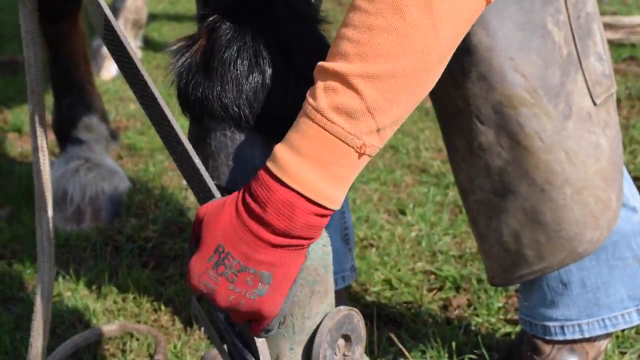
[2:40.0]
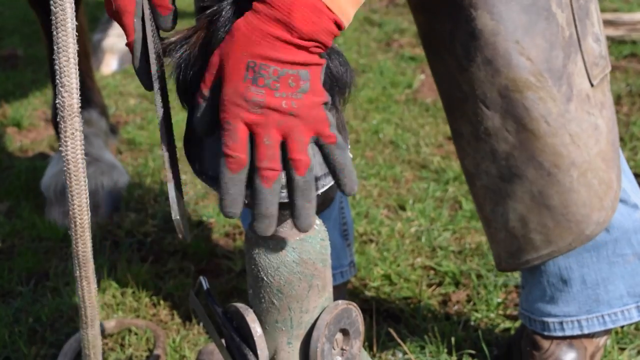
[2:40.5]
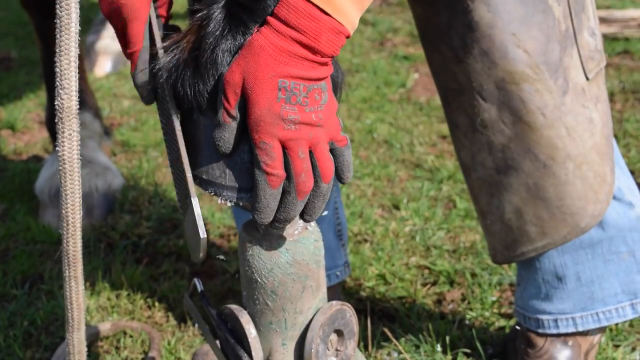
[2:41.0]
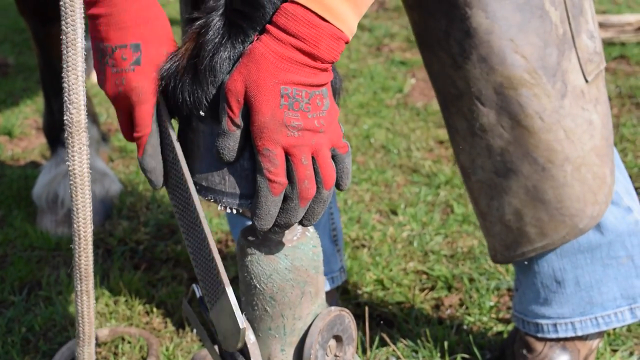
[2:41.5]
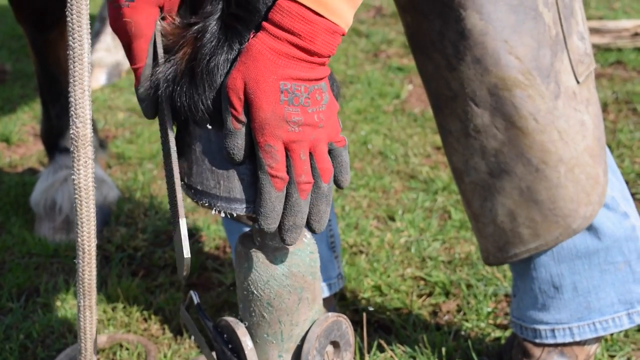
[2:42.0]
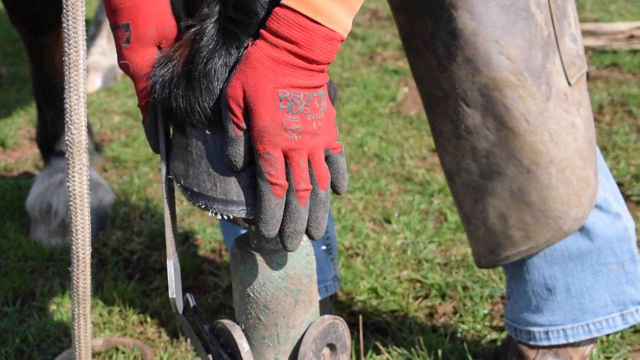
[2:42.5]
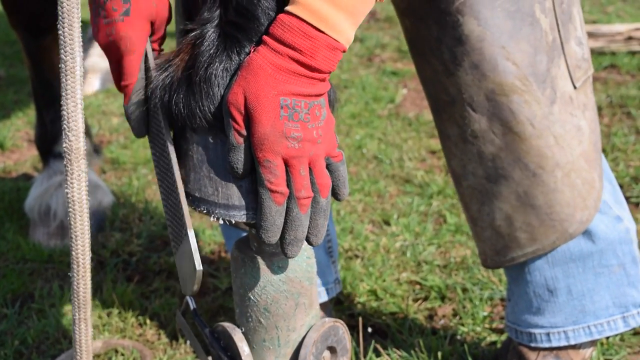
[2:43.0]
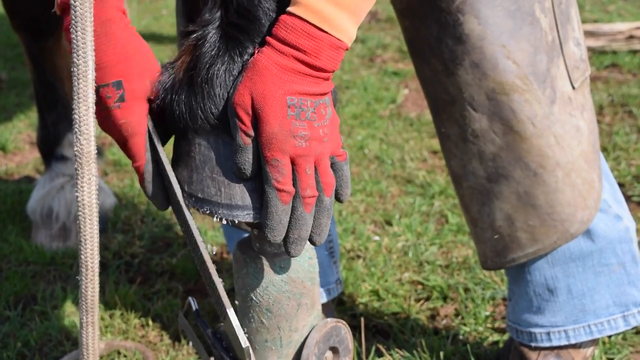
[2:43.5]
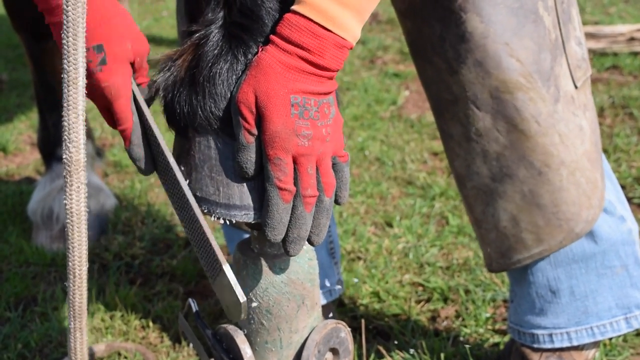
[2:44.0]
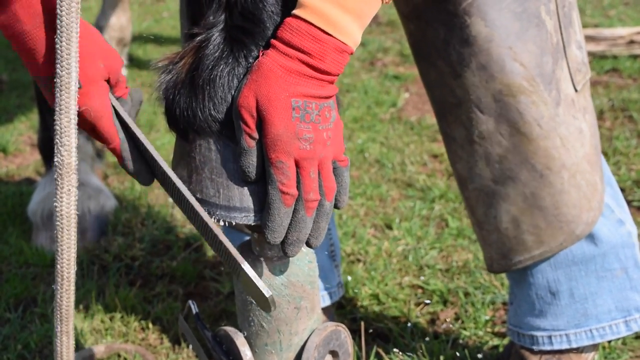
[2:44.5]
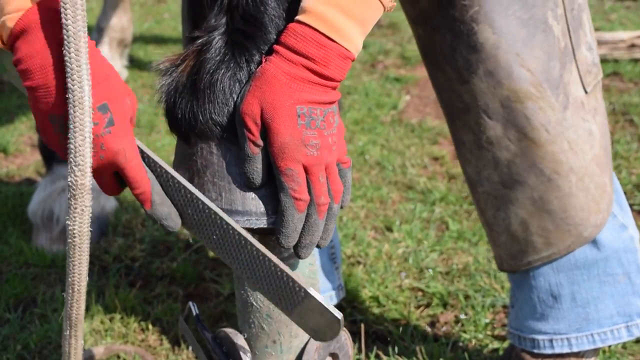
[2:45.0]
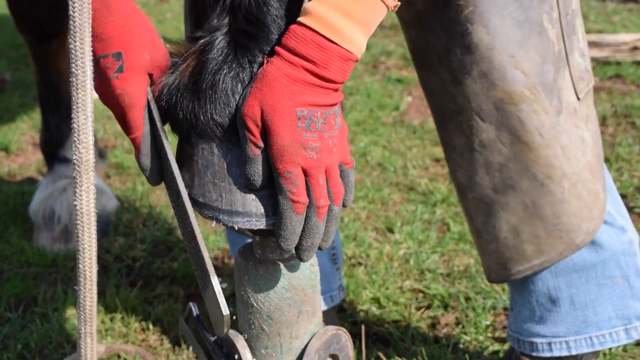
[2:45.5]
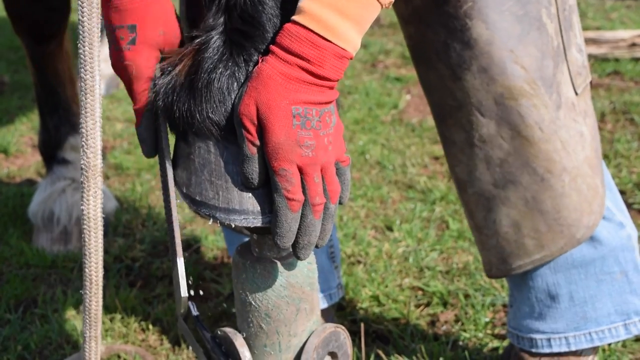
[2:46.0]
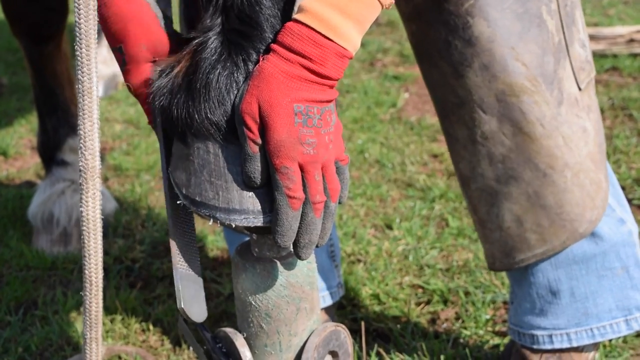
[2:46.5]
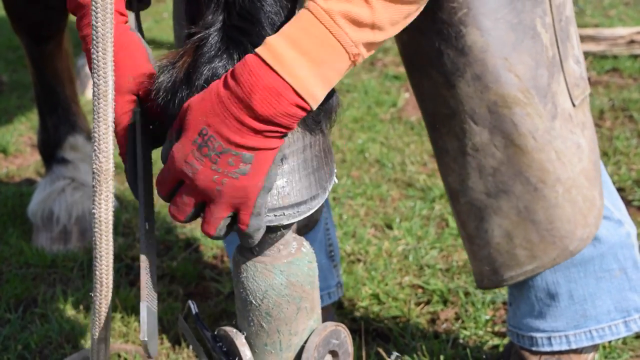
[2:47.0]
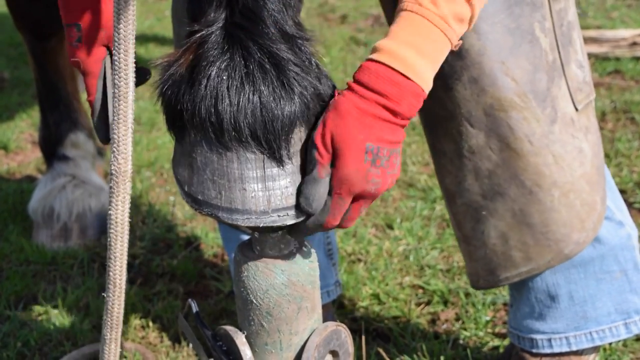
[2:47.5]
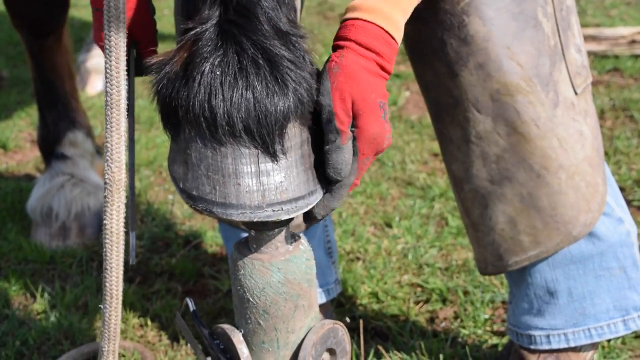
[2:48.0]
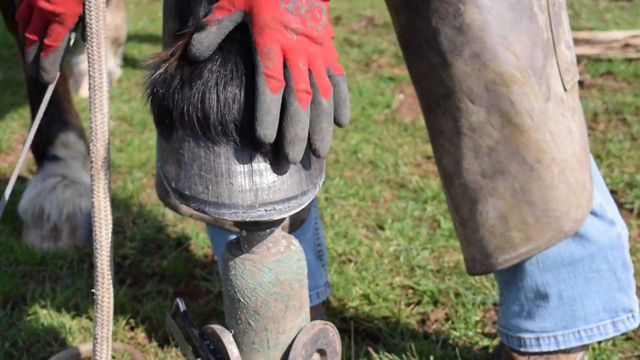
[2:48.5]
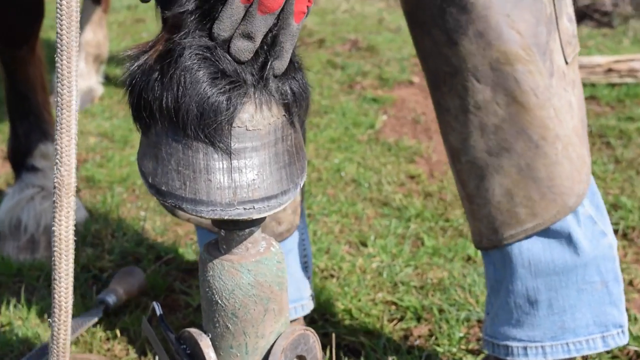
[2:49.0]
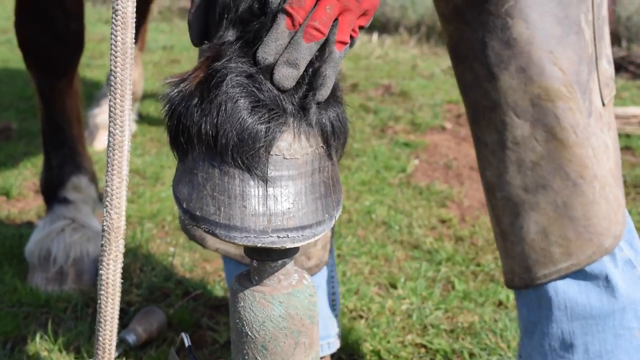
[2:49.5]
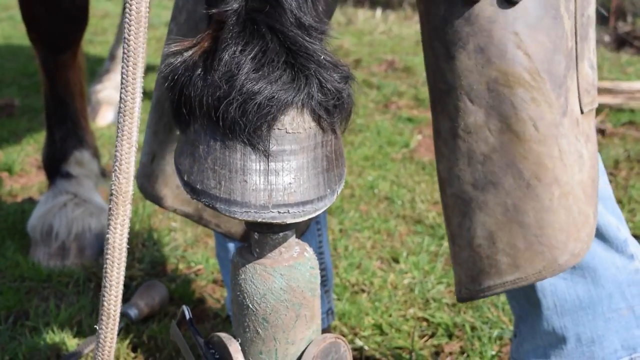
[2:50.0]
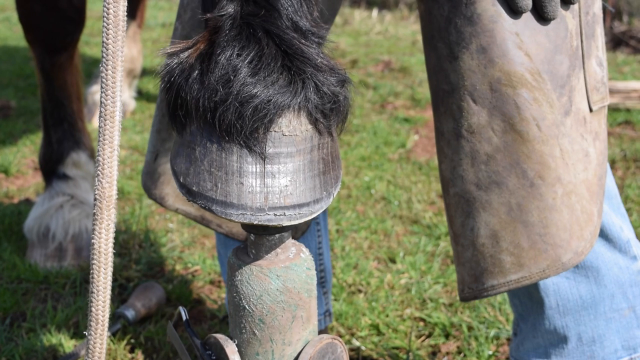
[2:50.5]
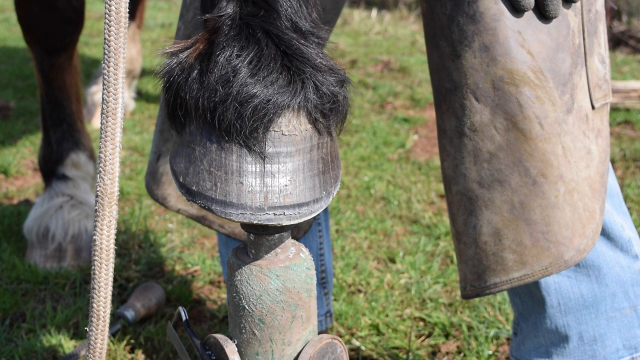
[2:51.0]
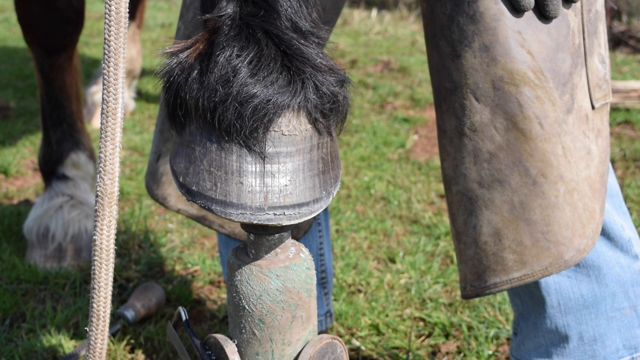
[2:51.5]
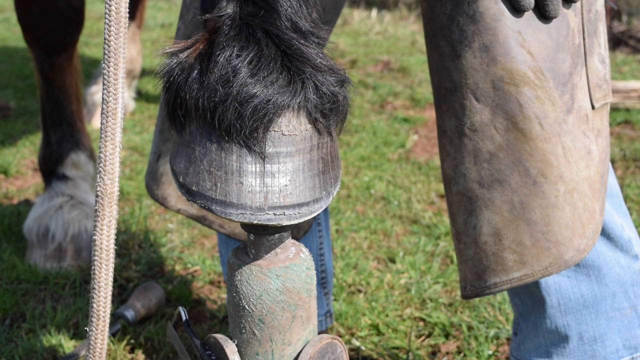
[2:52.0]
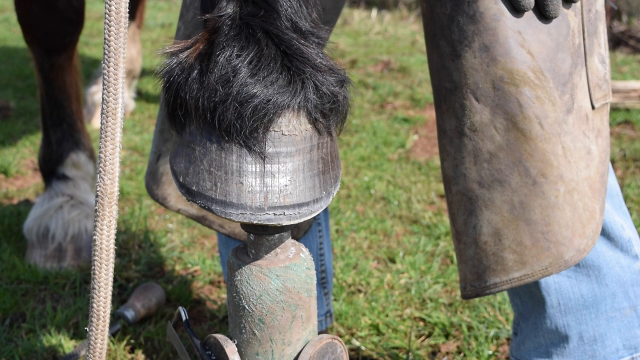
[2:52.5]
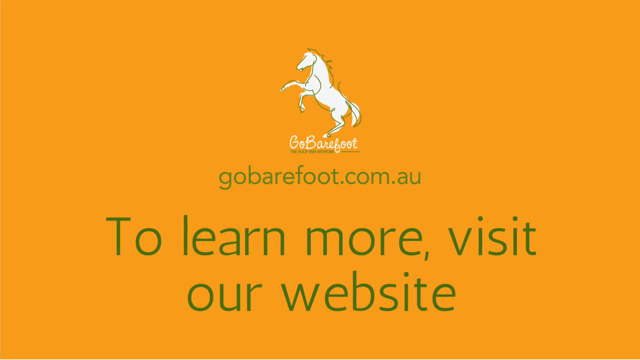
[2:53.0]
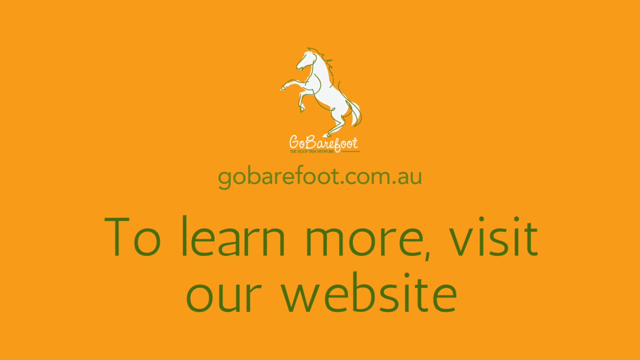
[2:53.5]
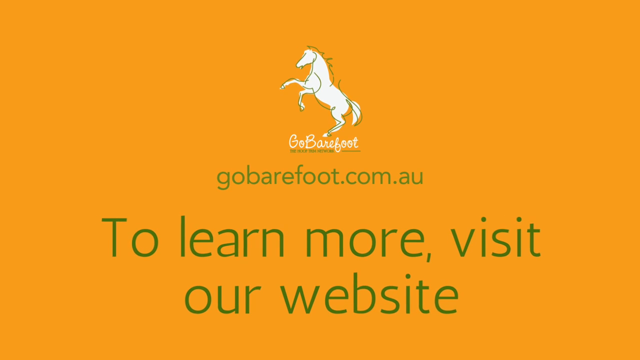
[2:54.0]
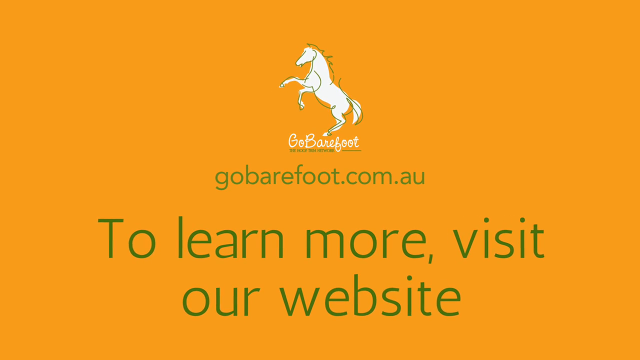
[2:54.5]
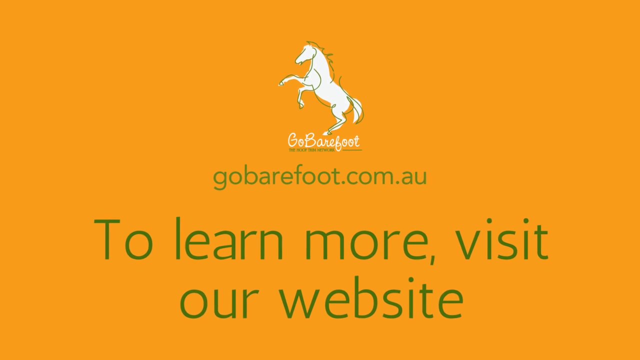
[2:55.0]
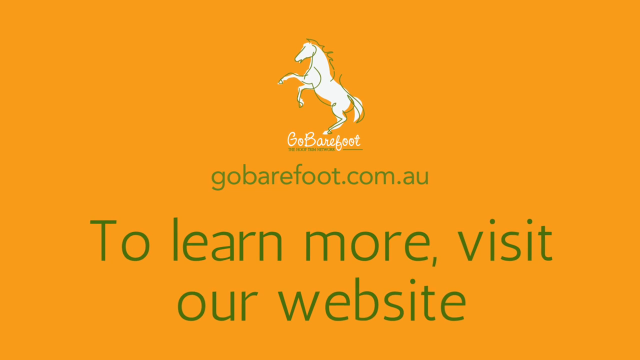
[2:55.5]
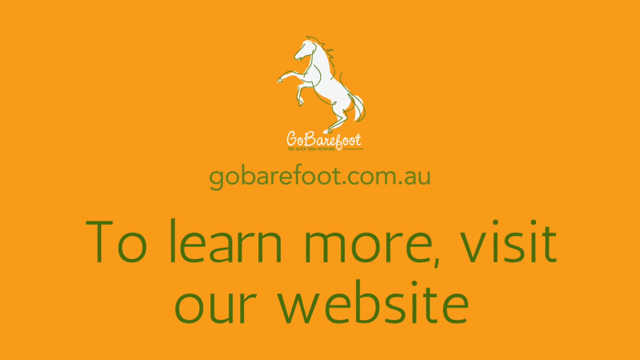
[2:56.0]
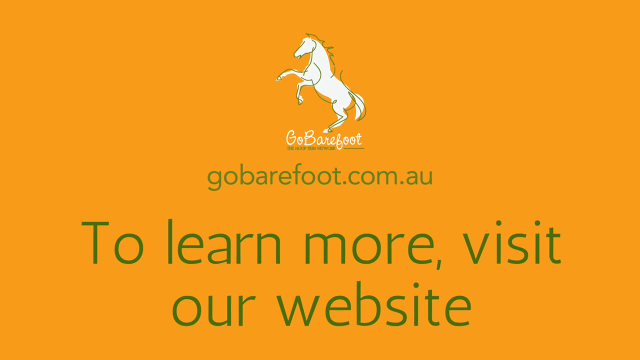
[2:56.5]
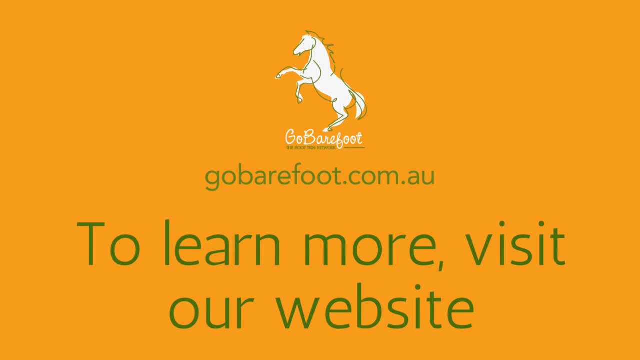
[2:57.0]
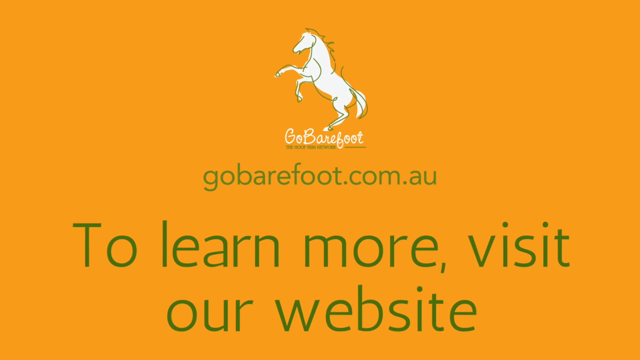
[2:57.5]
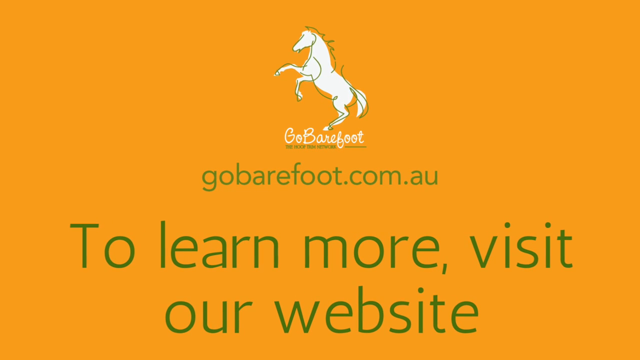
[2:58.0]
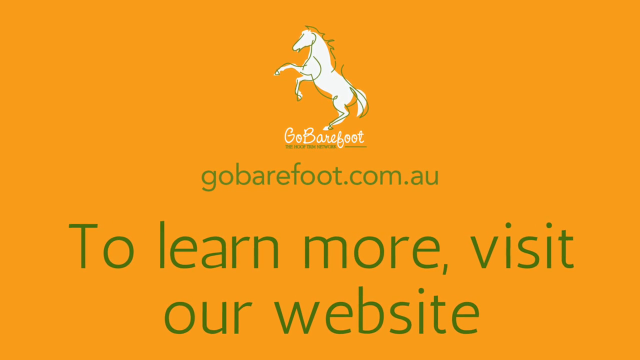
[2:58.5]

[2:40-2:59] With the horse's hoof still on top of the same metal stand, she continues filing with the same tool until it looks smooth, making a few last files while holding the hoof sturdy with her left hand and filing with her right. She then runs her right hand around the hoof to show that the whole hoof is smooth, lifts up the horse's black fur to show it off, and throws the file to the side. She stands up, having finished. The green grass, the horse standing still, and the horse's shadow are visible in the background, along with her boots, jeans, smock, red and black gloves, and the tips of her orange sleeves.